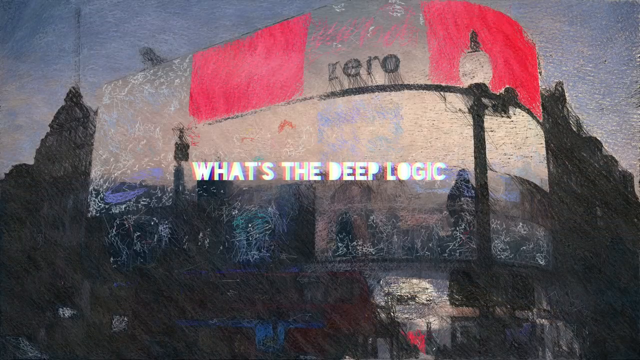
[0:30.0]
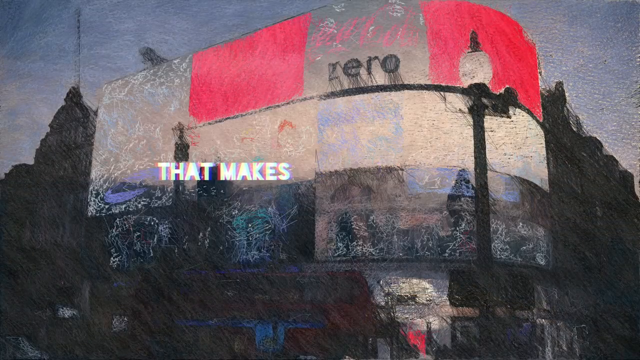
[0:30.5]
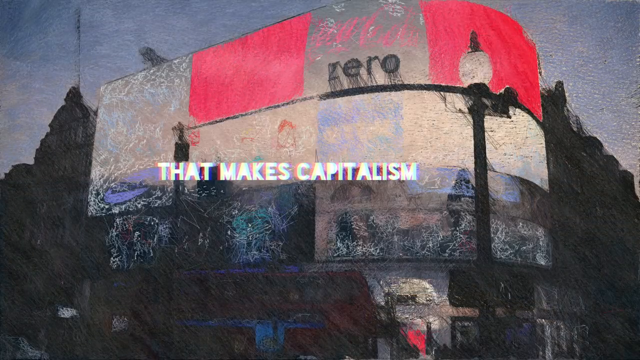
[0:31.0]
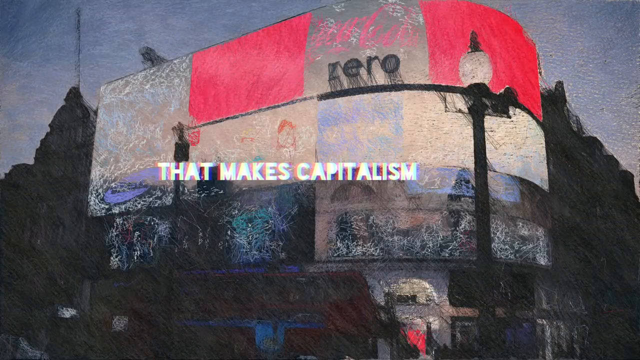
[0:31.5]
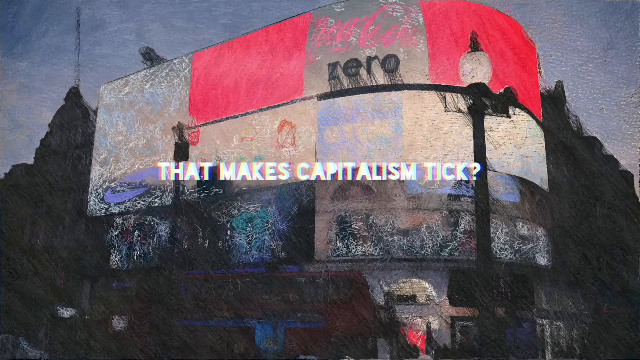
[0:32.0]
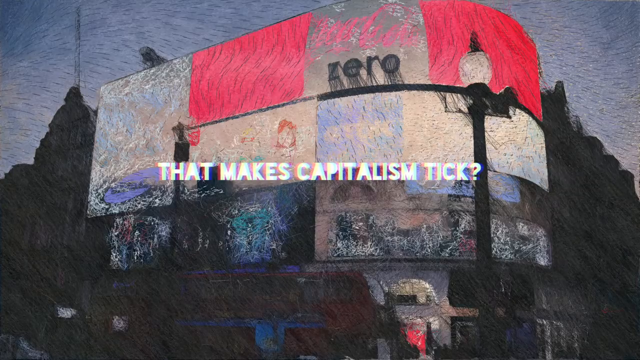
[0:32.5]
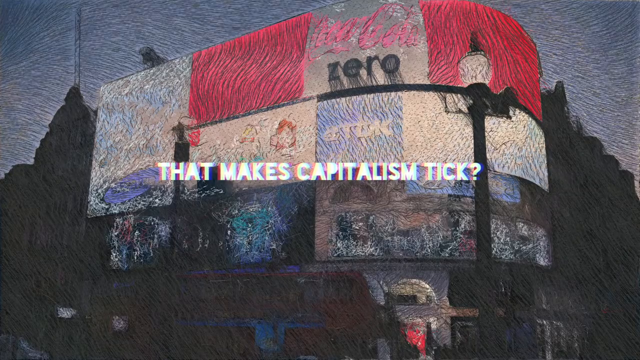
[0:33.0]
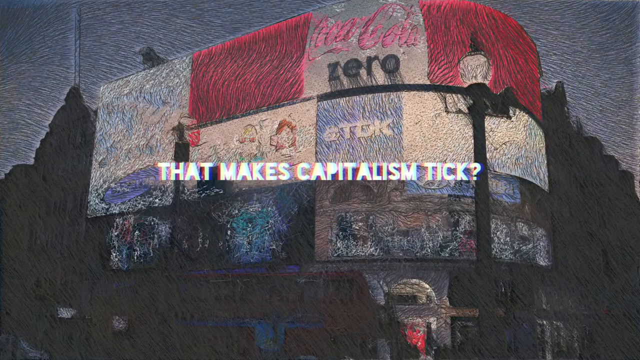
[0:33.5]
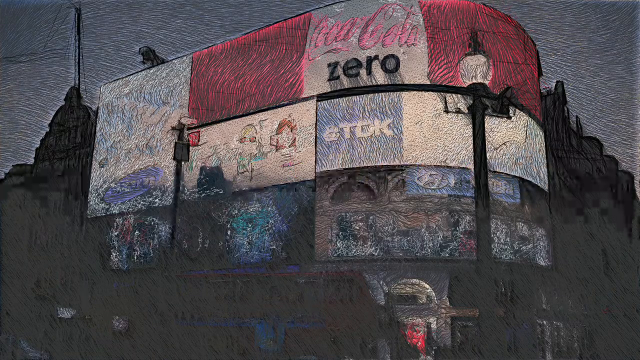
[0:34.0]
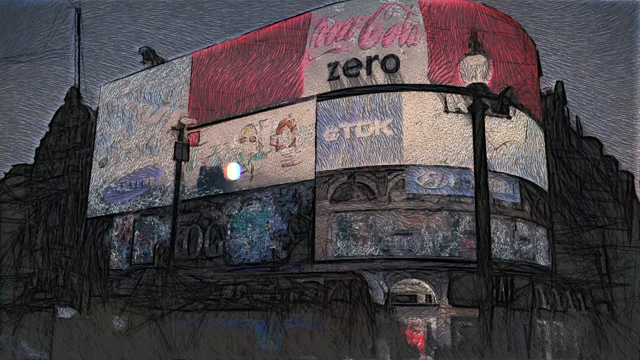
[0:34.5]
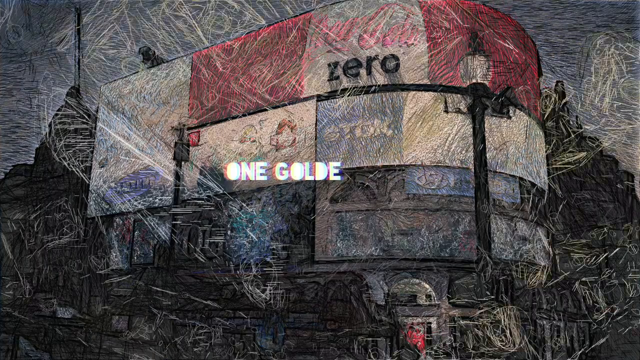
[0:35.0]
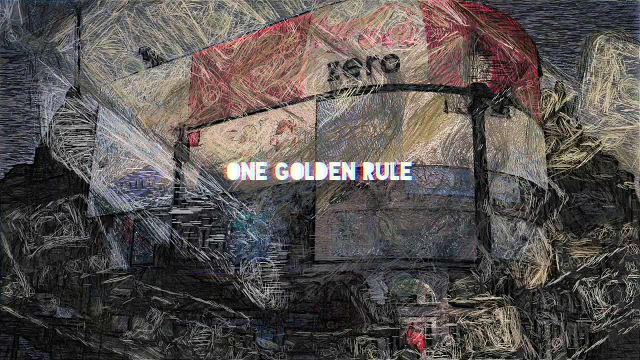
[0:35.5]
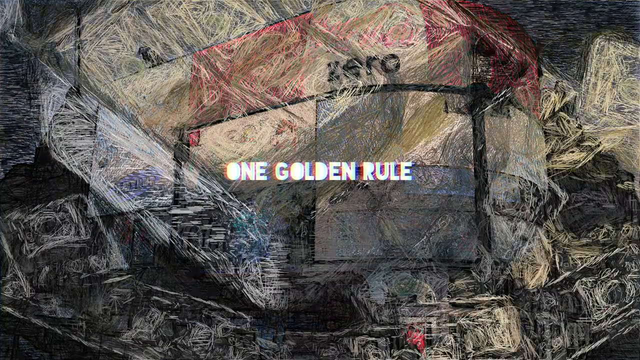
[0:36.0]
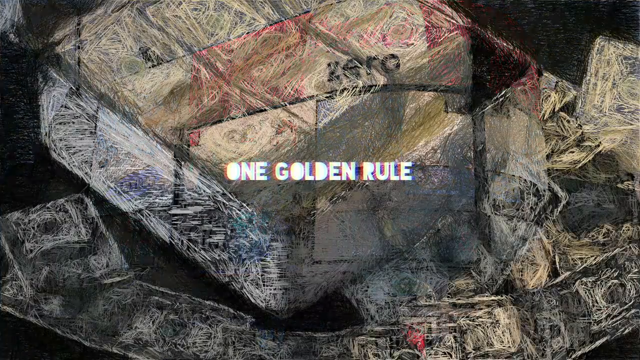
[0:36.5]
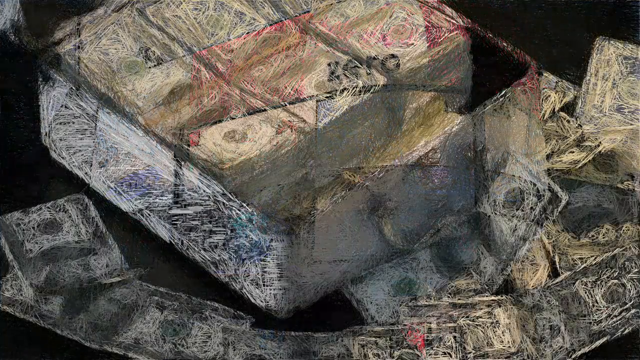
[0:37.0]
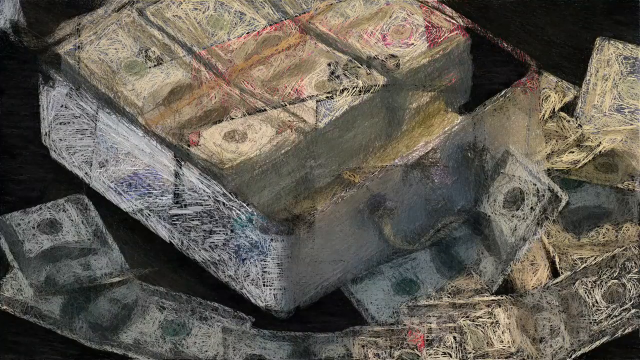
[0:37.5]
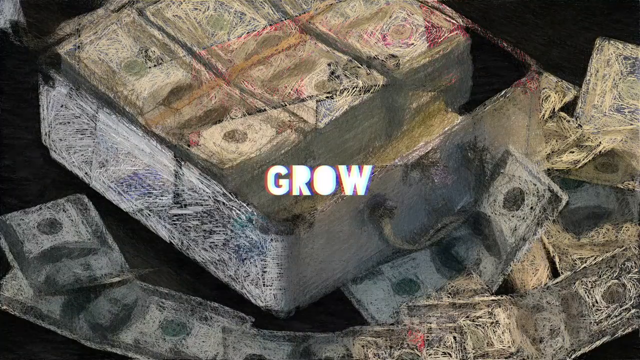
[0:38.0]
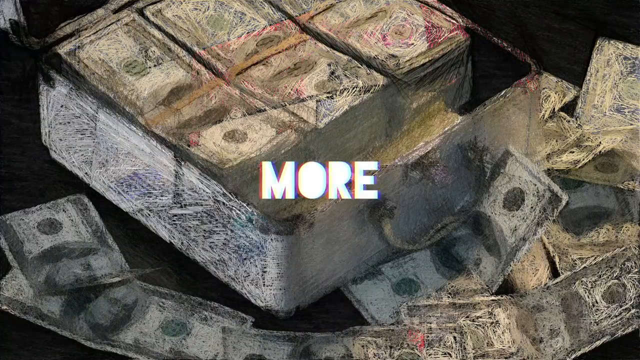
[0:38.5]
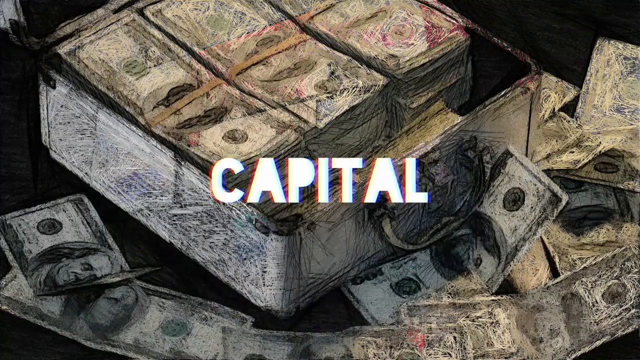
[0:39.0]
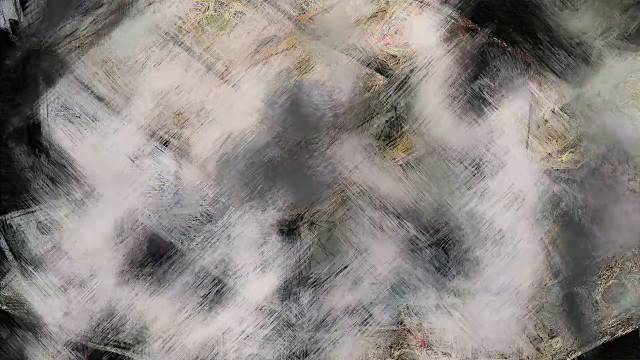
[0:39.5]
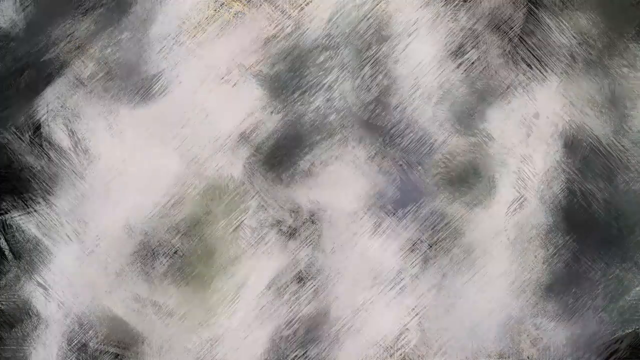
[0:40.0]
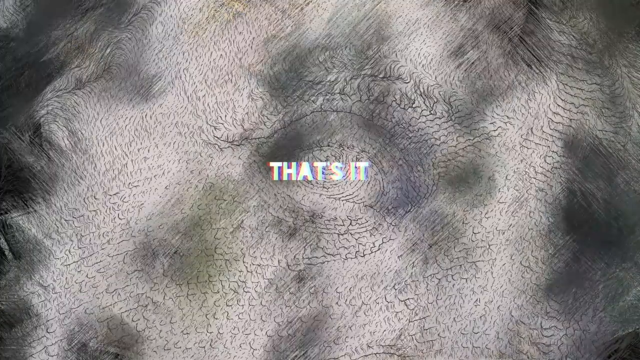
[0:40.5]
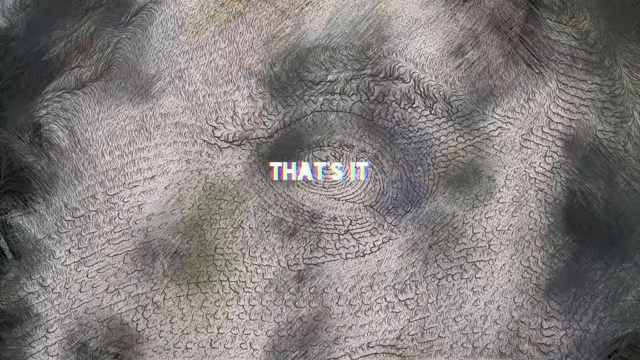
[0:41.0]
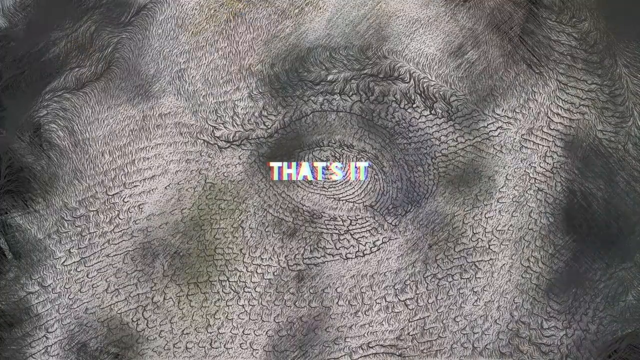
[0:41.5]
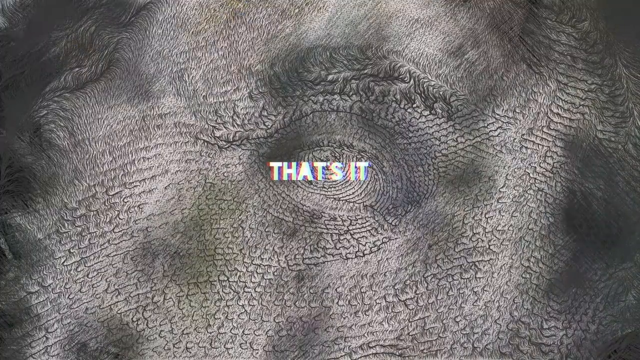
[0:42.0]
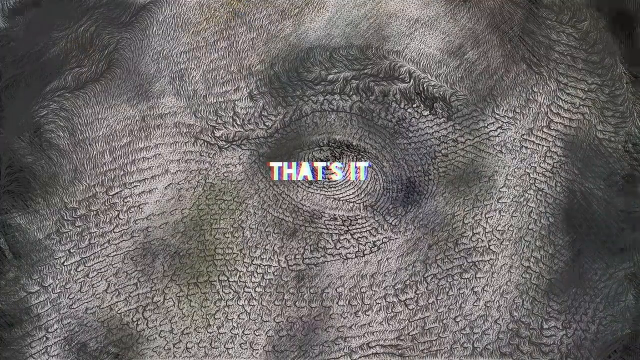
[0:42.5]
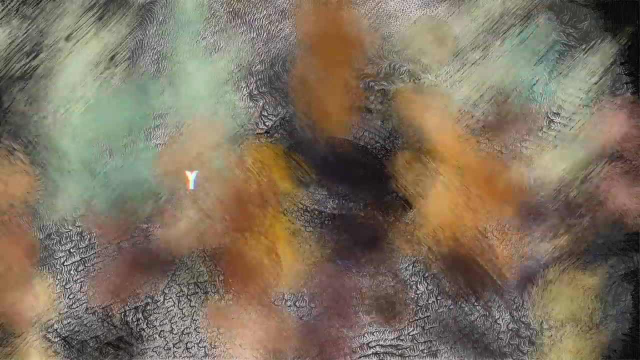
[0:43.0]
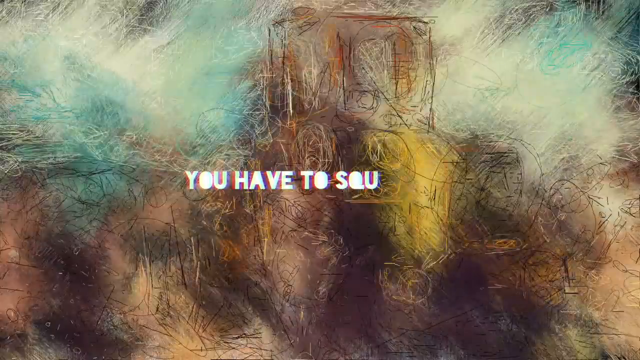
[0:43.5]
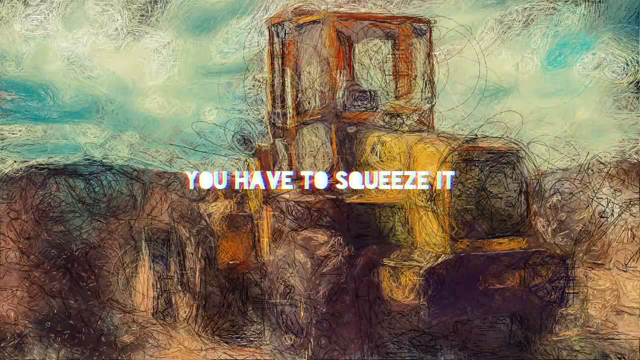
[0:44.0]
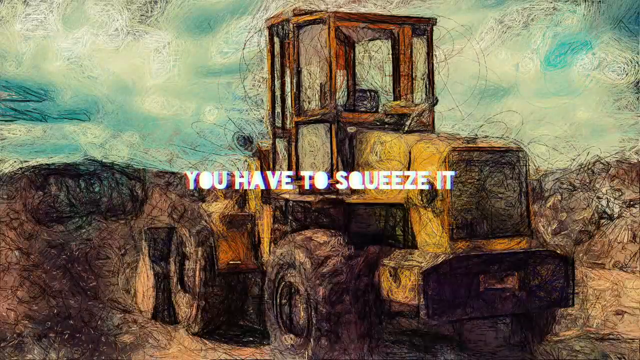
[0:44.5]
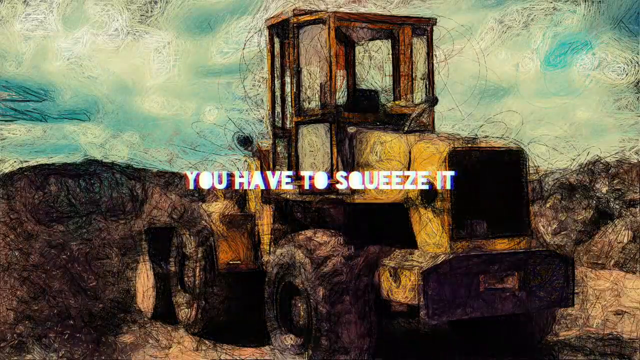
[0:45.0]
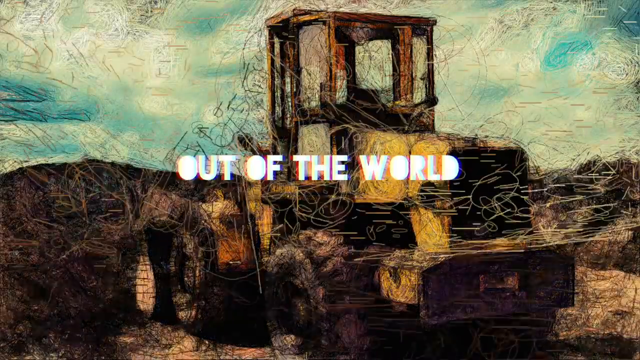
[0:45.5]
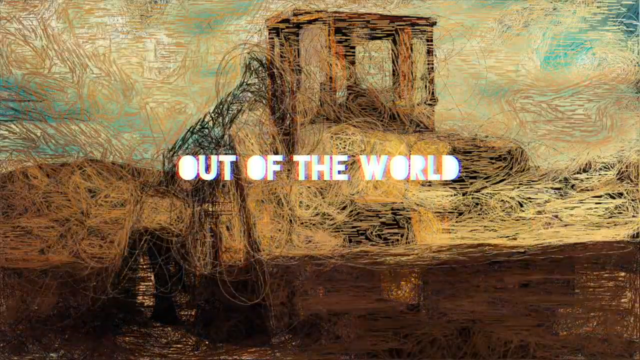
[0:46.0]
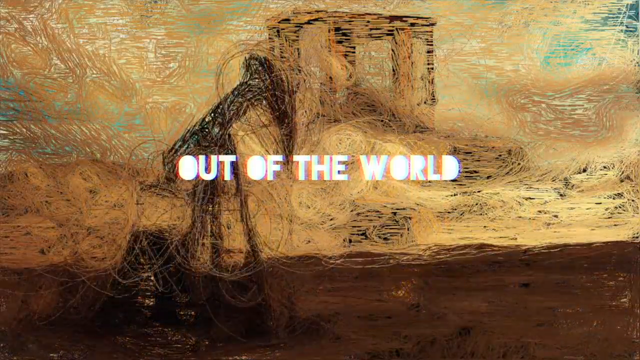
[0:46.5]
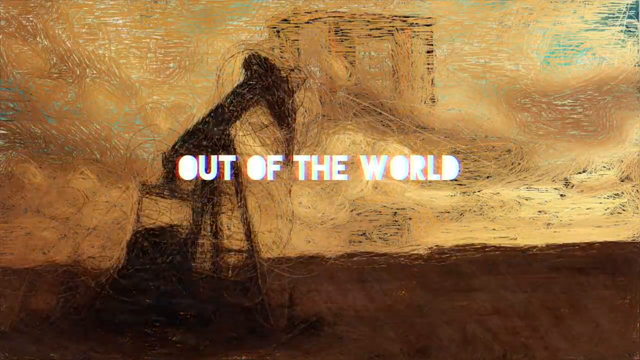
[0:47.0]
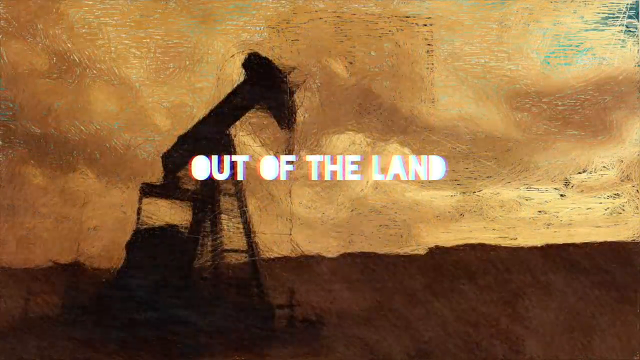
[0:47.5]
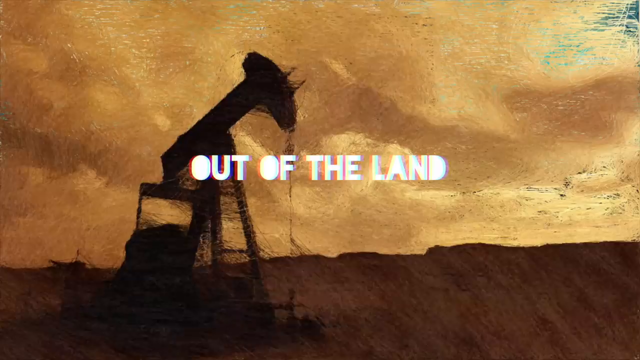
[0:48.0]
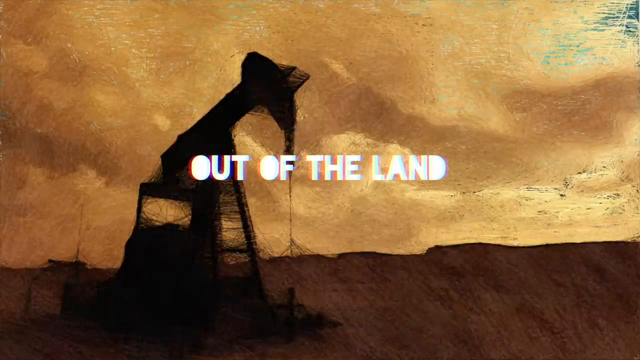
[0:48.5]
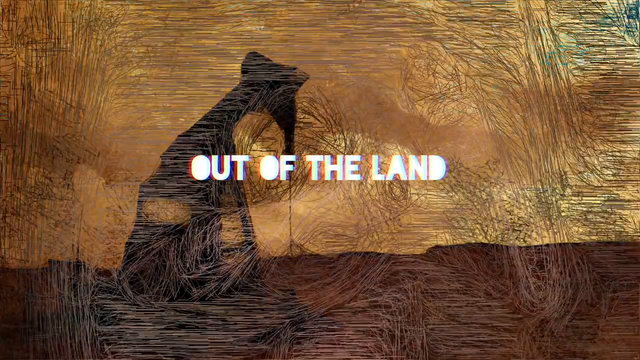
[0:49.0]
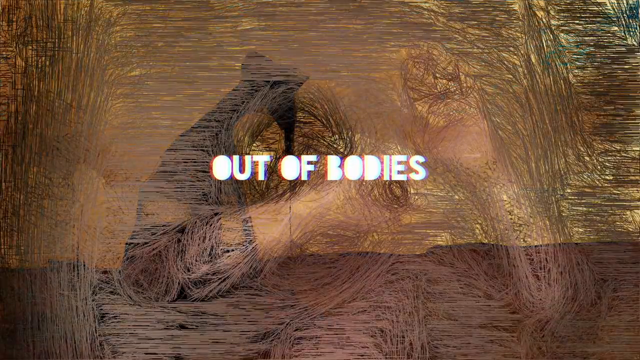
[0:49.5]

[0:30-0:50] The video continues on capitalism. On-screen text asks "what's the deep logic that makes capitalism tick" and answers "one golden rule, grow more capital, that's it", followed by text saying they have to squeeze it "out of the world, out of the land, out of the bodies". A caterpillar appears, and companies including Coca-Cola are shown.